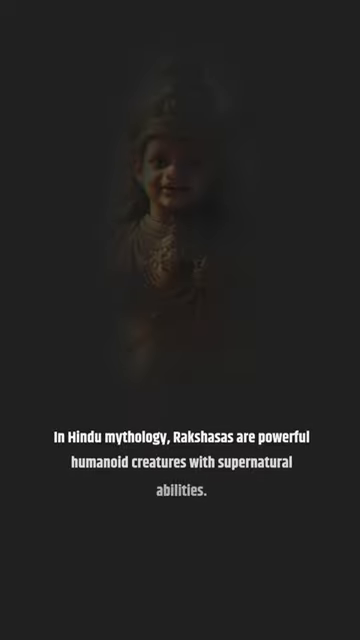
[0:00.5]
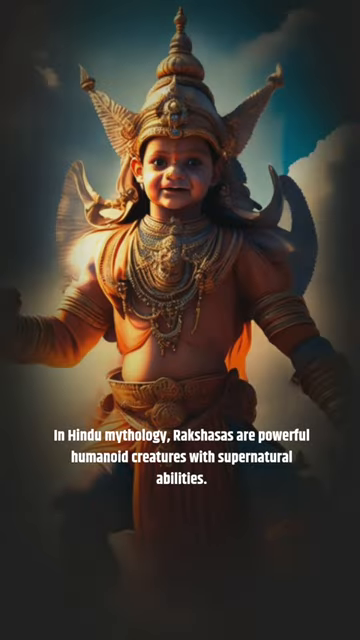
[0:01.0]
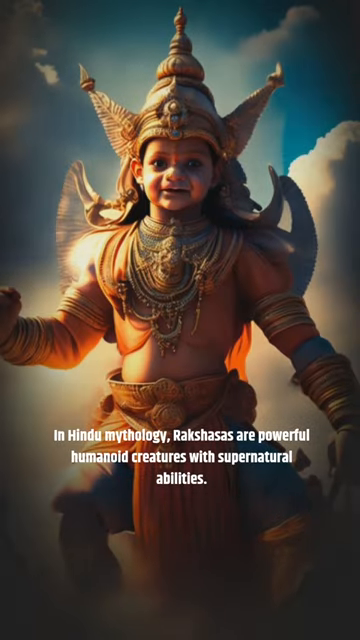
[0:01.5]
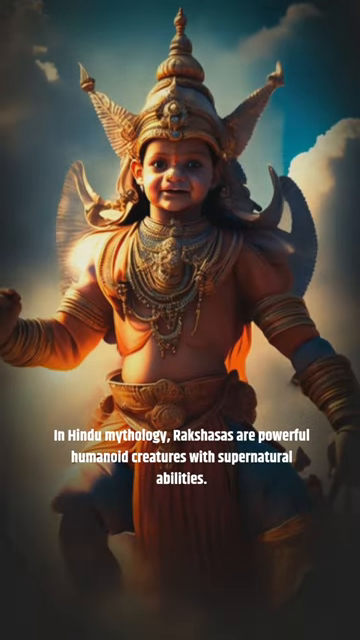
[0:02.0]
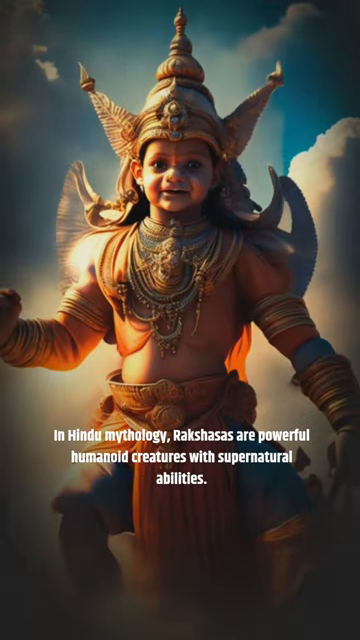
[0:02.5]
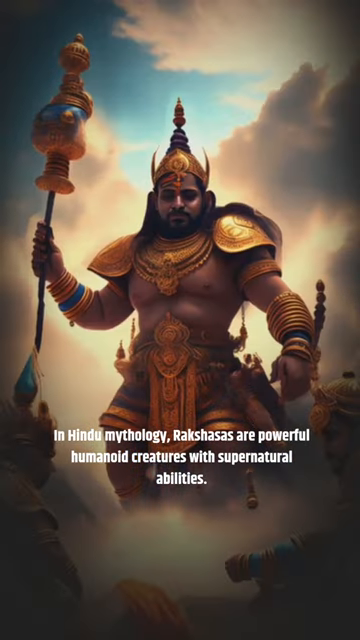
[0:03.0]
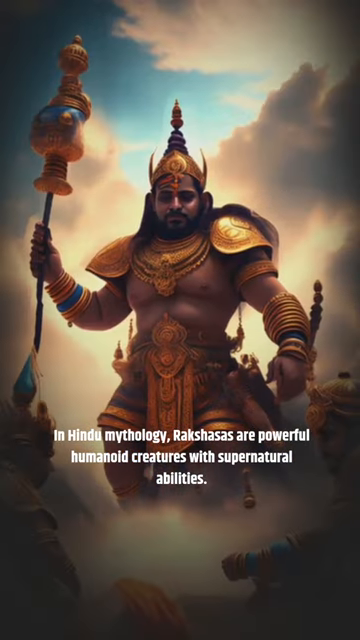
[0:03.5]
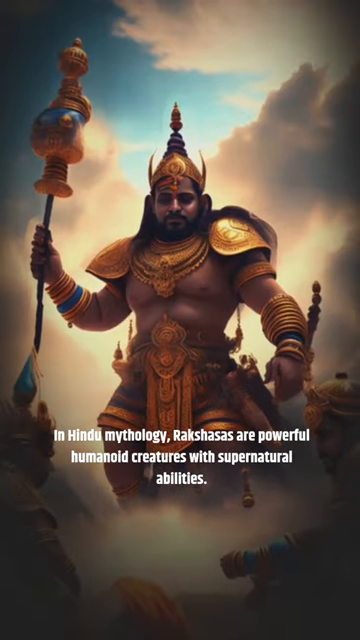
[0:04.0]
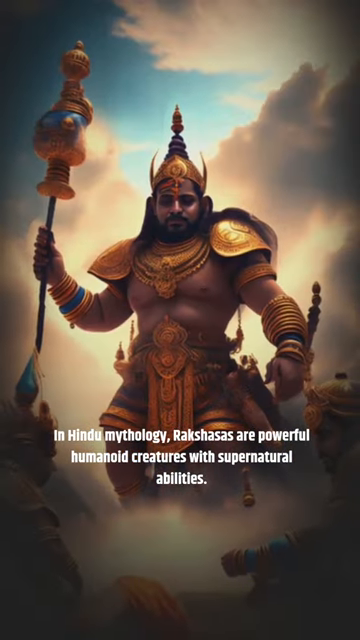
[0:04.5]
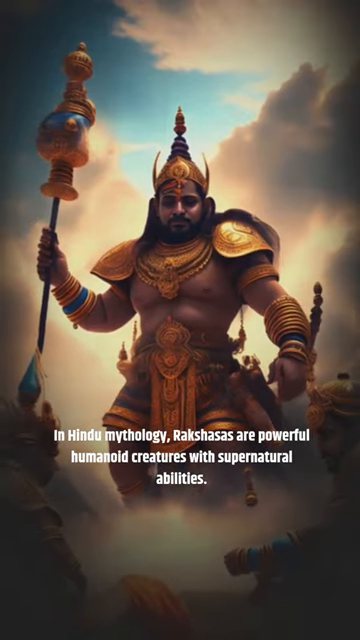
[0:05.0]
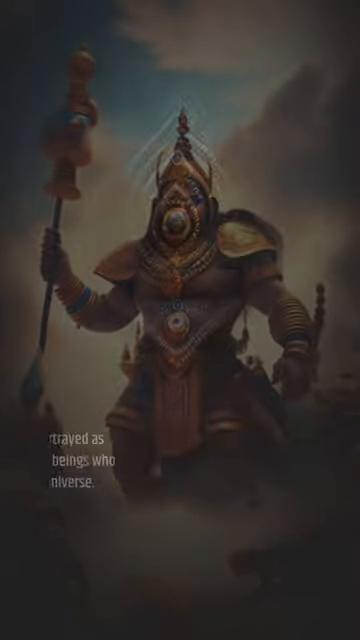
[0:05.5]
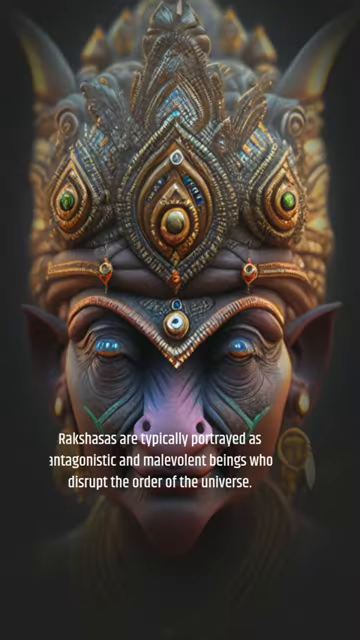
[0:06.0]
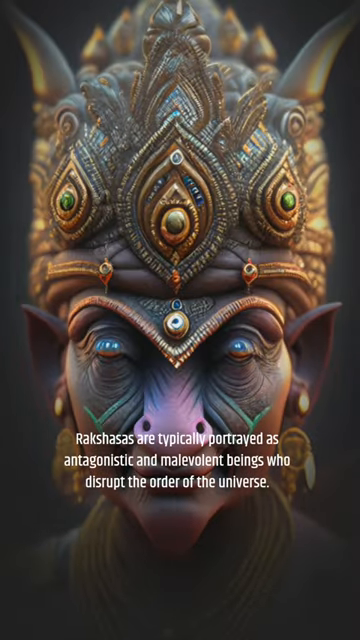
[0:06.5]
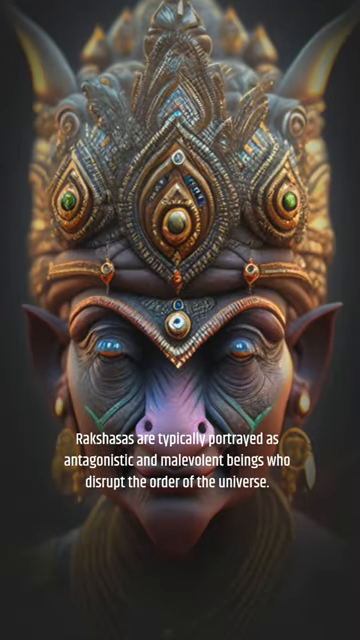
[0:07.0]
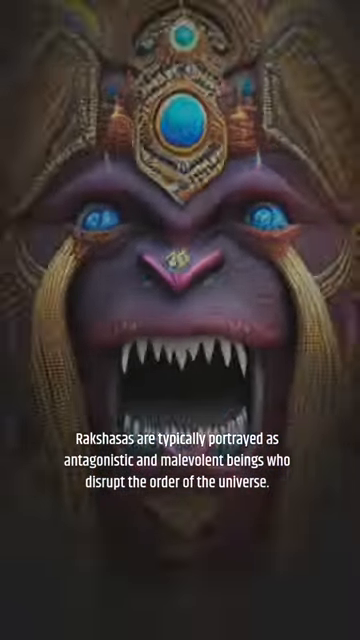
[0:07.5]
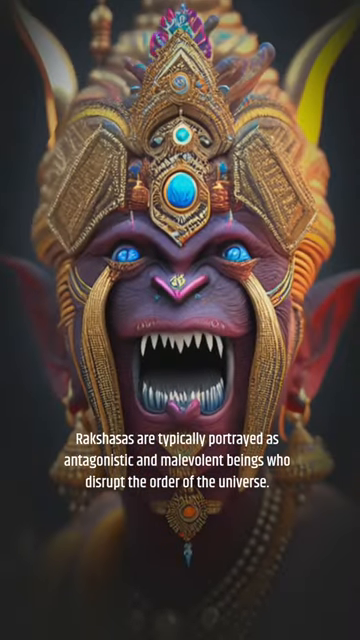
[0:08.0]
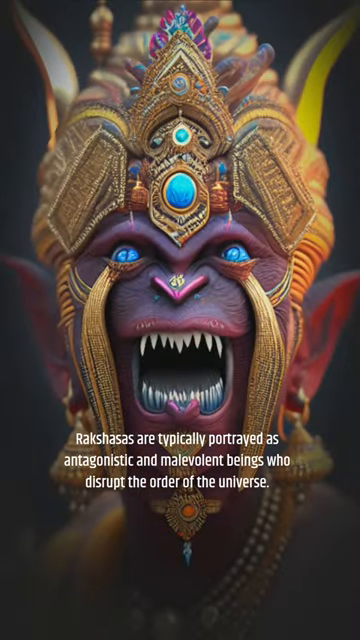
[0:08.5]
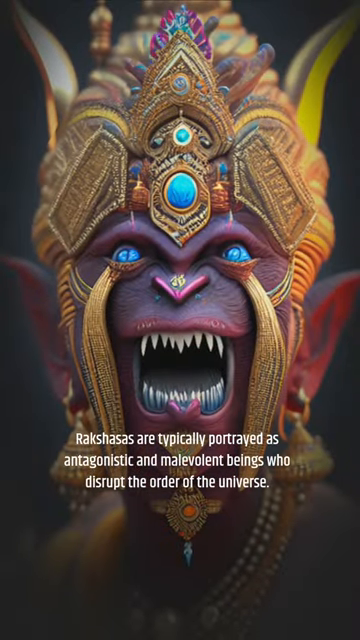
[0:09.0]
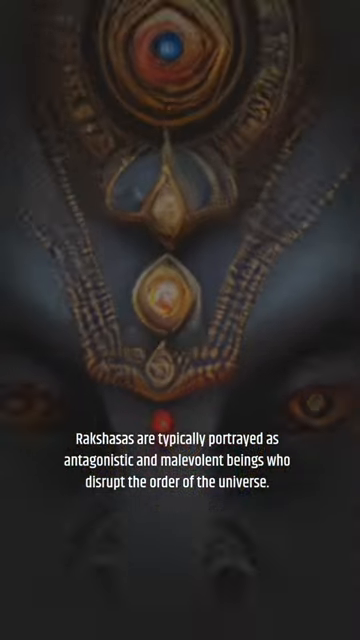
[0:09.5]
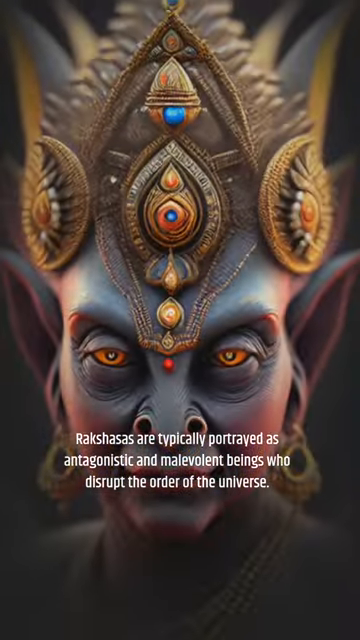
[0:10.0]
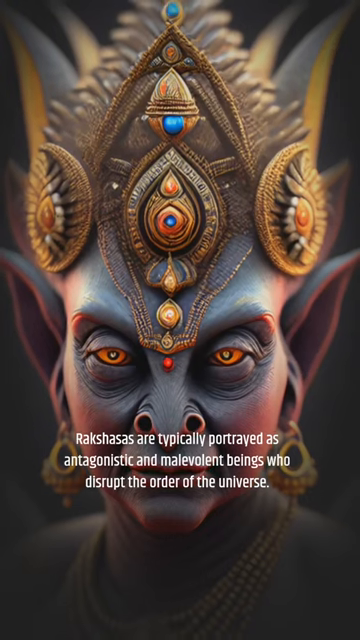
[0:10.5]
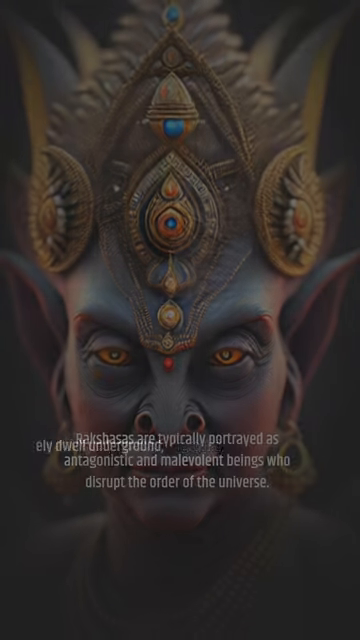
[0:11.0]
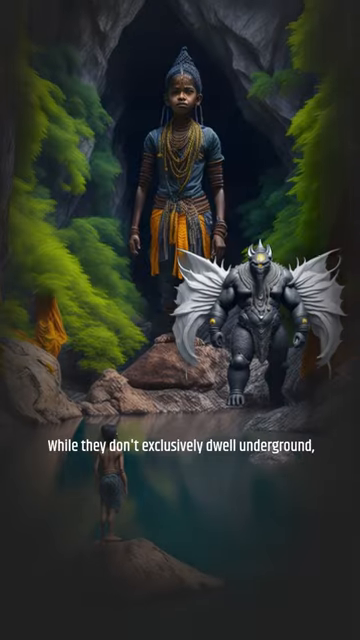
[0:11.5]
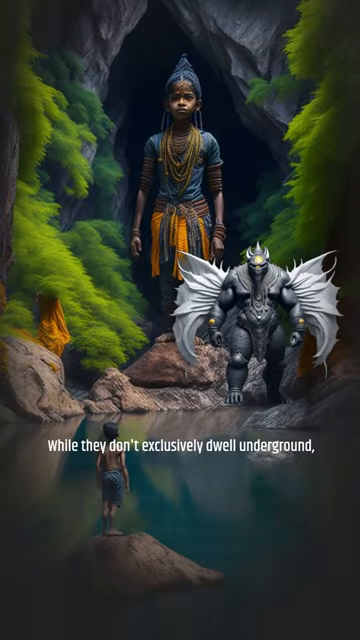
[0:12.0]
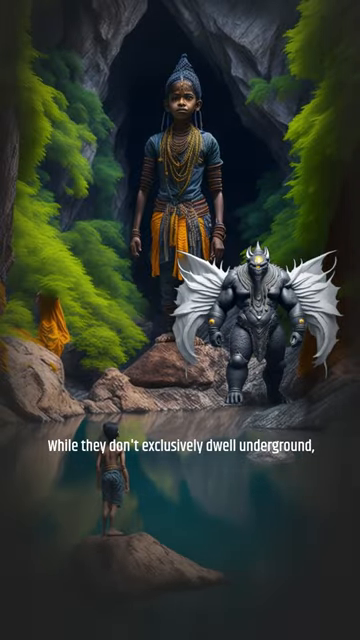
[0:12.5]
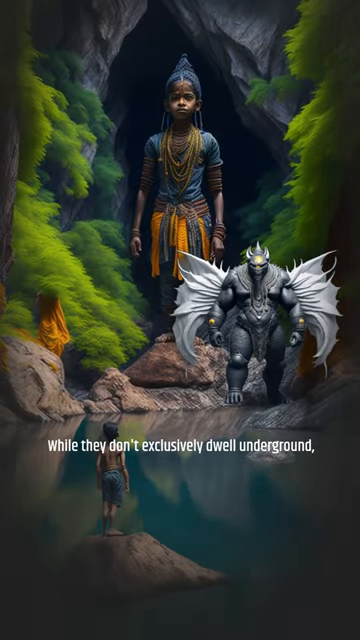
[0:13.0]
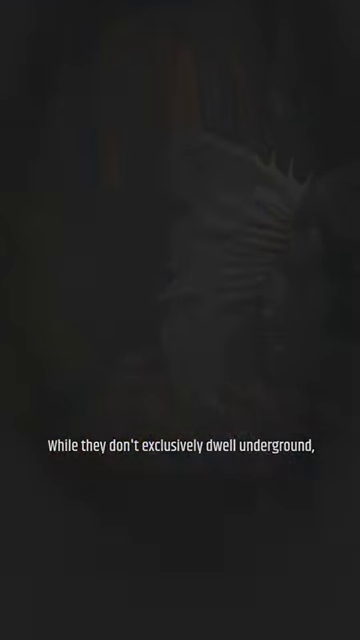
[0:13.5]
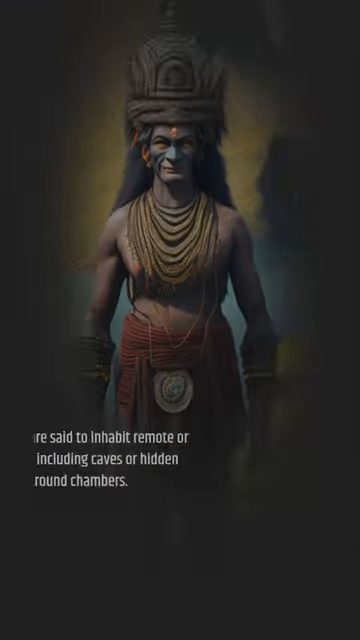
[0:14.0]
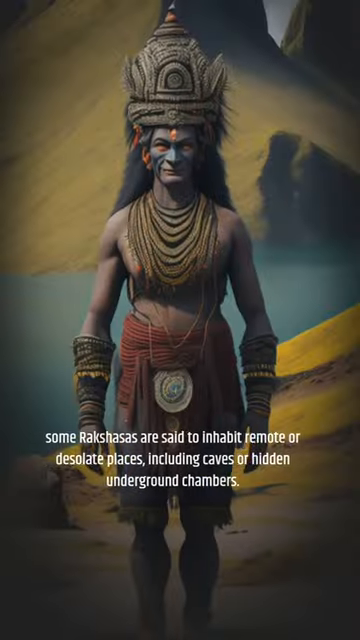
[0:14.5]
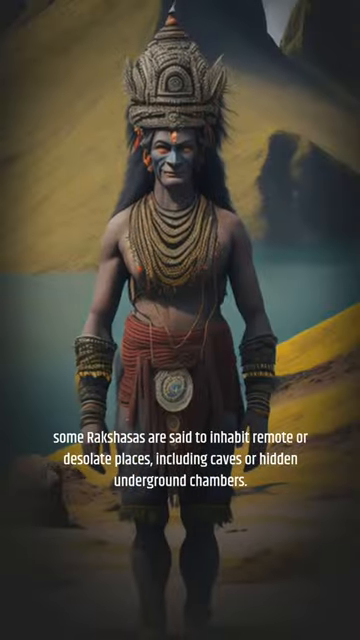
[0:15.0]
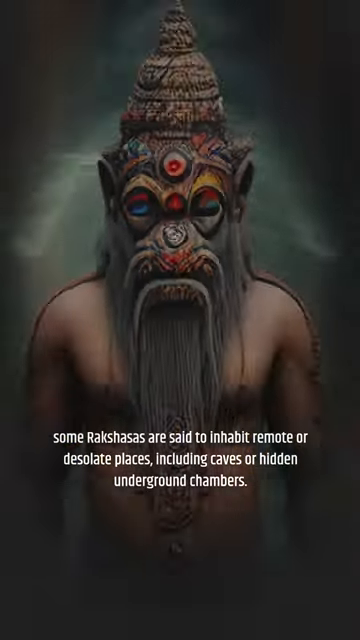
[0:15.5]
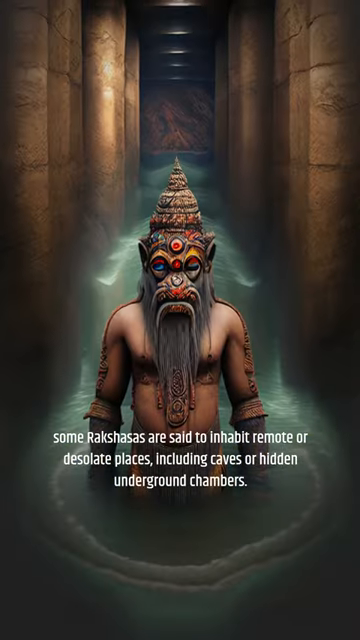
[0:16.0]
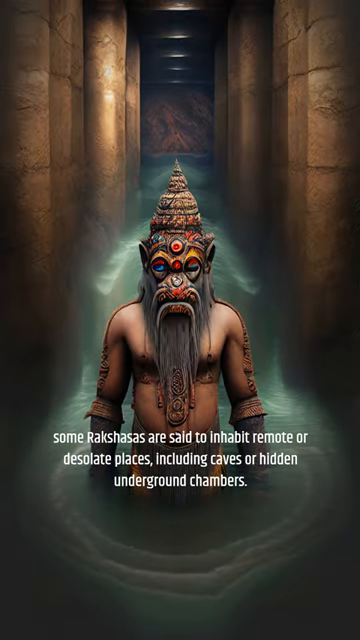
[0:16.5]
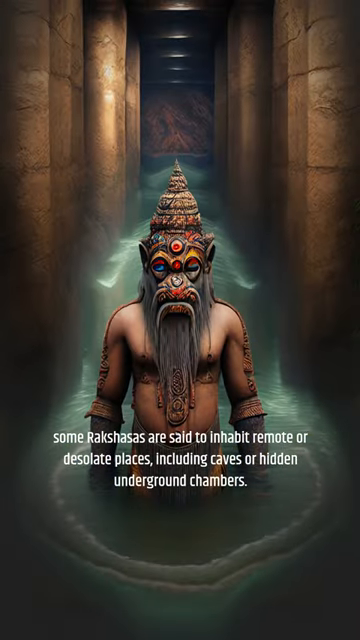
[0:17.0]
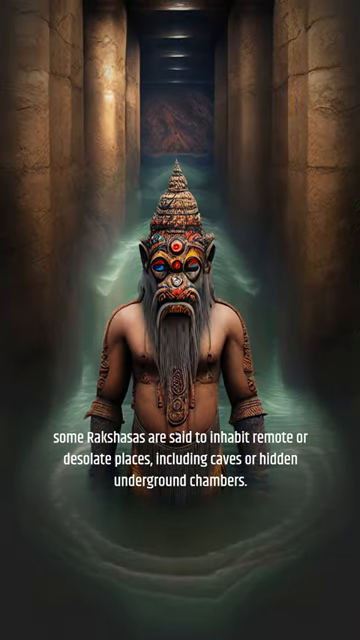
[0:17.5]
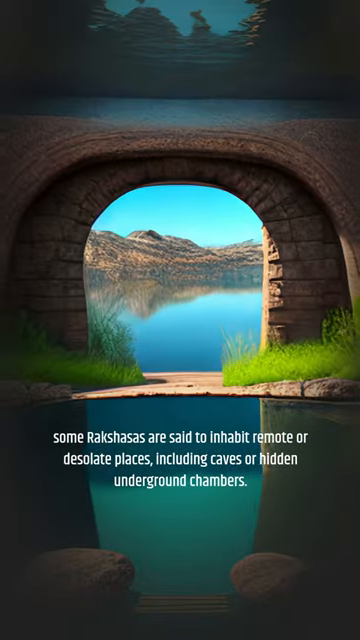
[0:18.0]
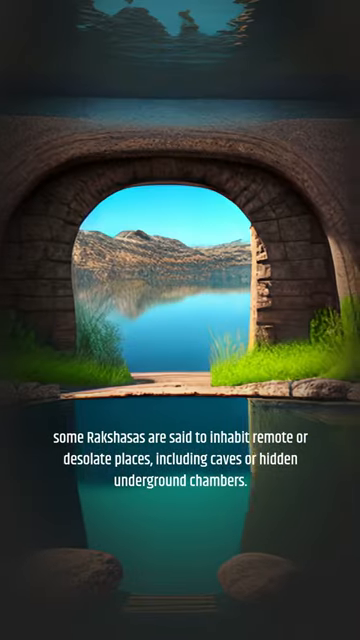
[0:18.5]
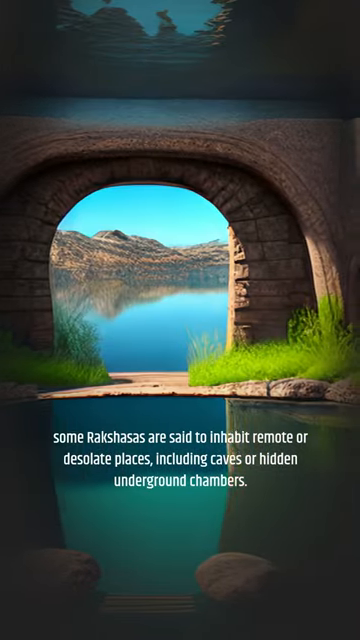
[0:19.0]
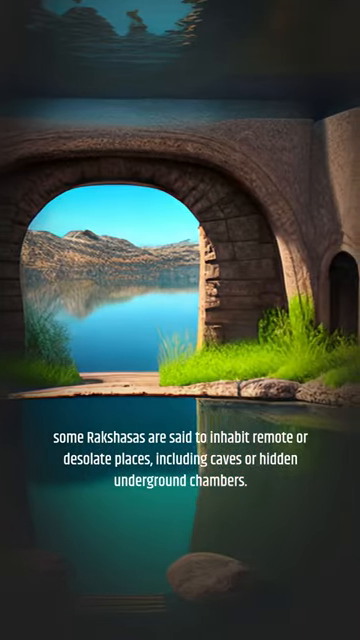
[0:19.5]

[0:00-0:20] The scene fades in from black on an Indian-skinned person wearing a crown with three points at the top of their head, with what looks to be angel wings behind their shoulders. A series of yellowish chains hangs from their neck, nothing covers their torso, cloth straps are wrapped around their forearms and upper arms, and they wear a big belt with a sash drooping down between their legs and blue baggy pants. The person is slightly obscured by a grainy filter that flashes black on the edges, and white text on the screen states that in Hindu mythology, Rakshasas are powerful humanoid creatures with supernatural abilities. The scene transitions to a larger, slightly darker man in similar clothing holding a big blue staff, then to an up-close photo of a slightly elephant-looking man with a pink nose wearing a different crown with three gems on it that symbolize eyes, and then to another photo of what seems to be a monkey with sharp teeth, red skin and a V for a nose, wearing yet another style of crown. The video is a slideshow of different AI images, and the text states that these beings disrupt the order of the universe. Another elephant-style man appears, followed by a scene in a strange forest with a very large child behind a grey demon as another child, standing on a rock in the middle of a body of water, looks towards them. A series of different variations of the same creature is then shown.